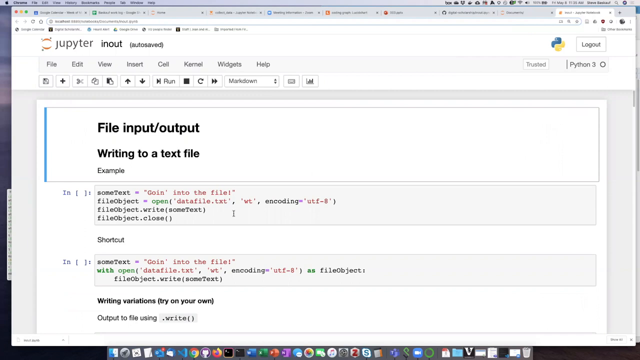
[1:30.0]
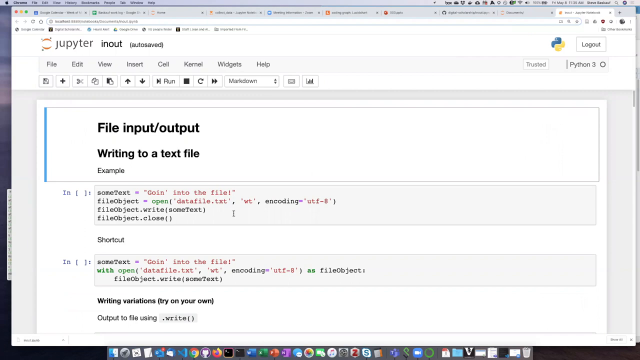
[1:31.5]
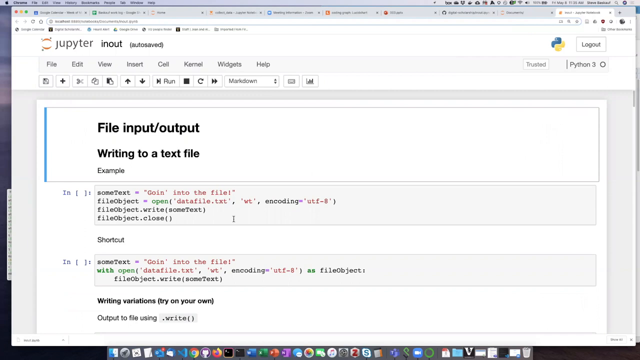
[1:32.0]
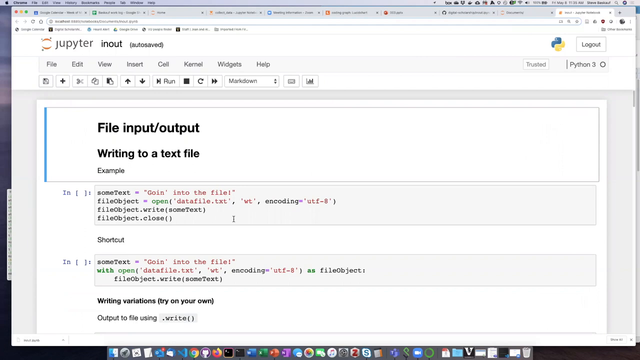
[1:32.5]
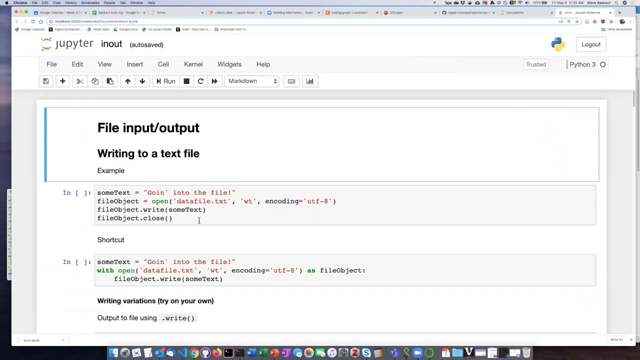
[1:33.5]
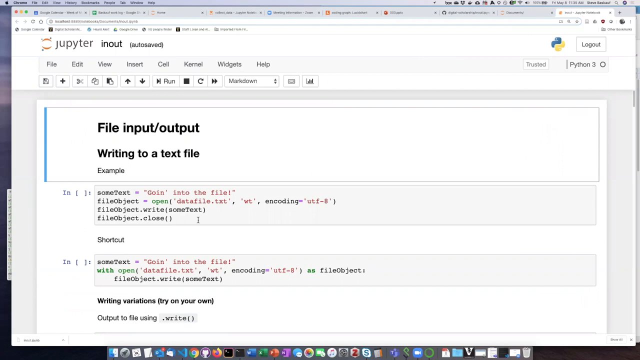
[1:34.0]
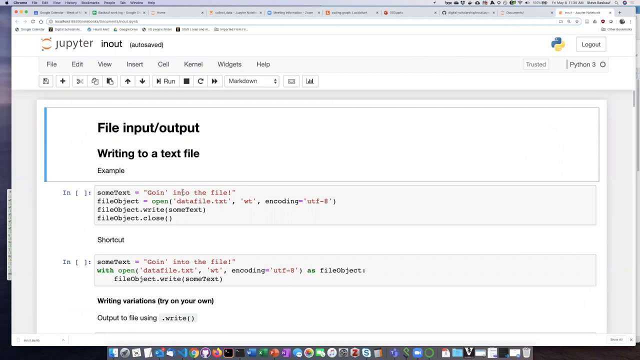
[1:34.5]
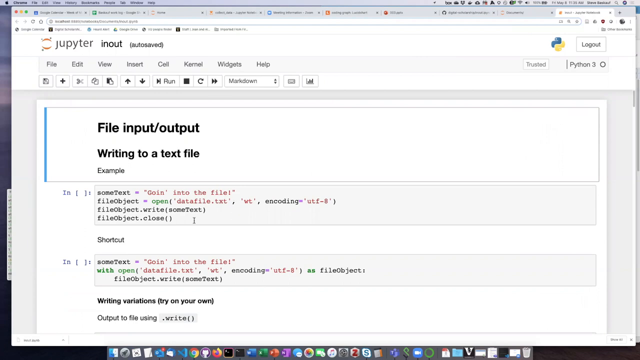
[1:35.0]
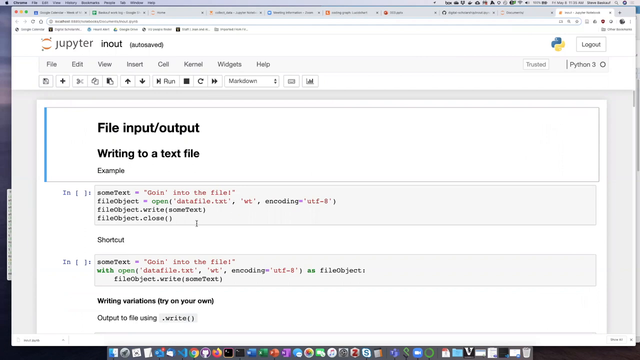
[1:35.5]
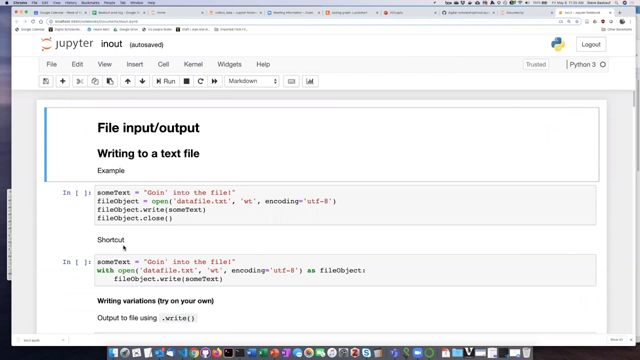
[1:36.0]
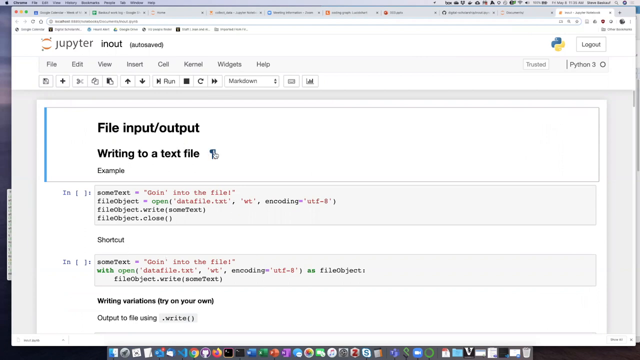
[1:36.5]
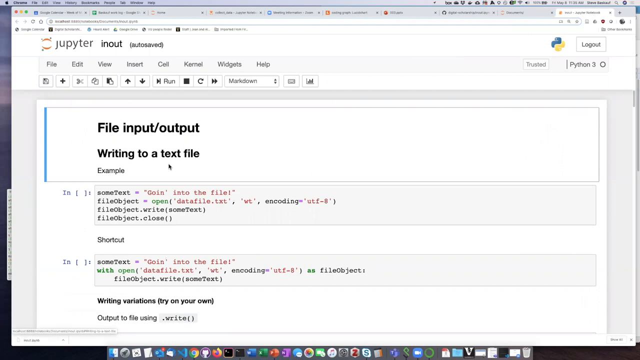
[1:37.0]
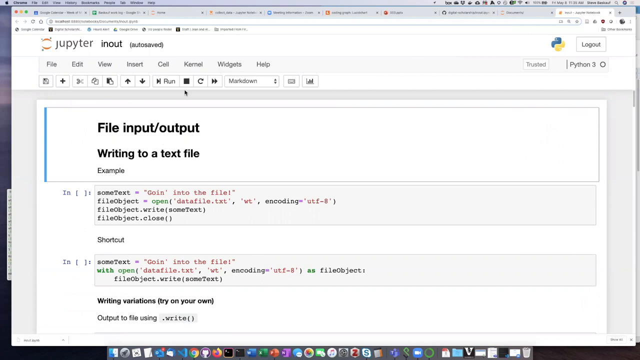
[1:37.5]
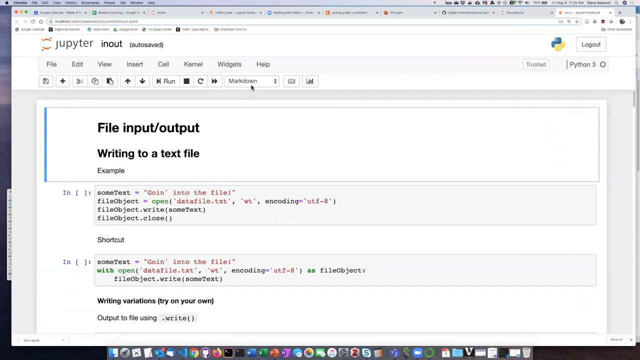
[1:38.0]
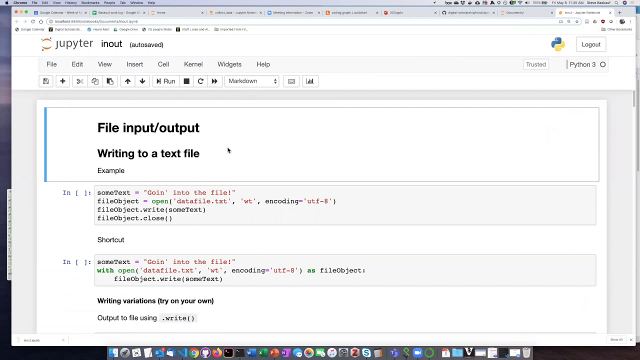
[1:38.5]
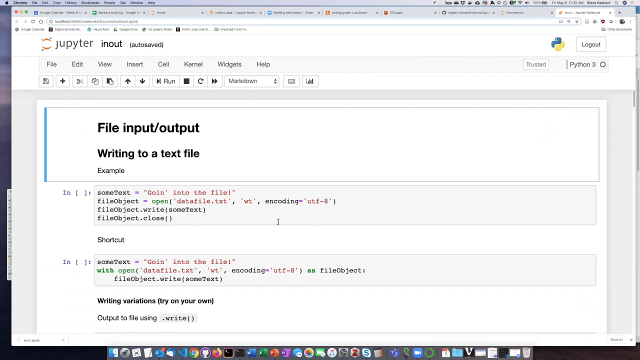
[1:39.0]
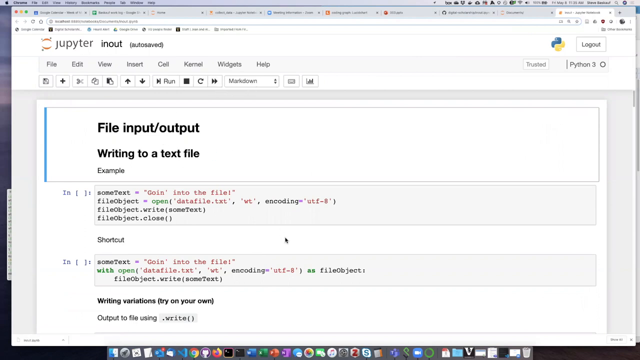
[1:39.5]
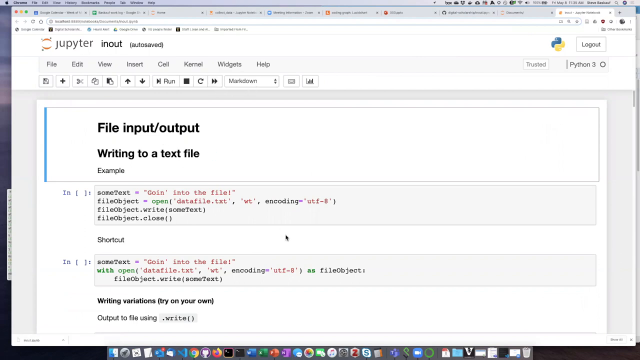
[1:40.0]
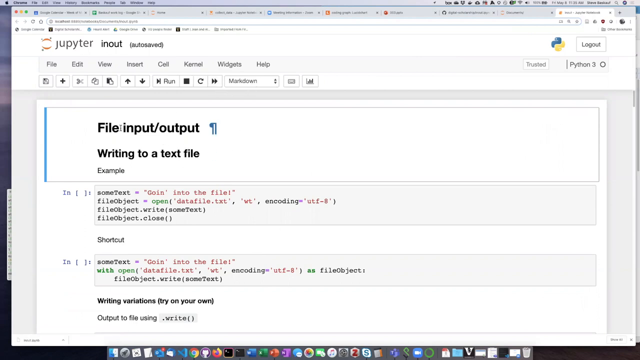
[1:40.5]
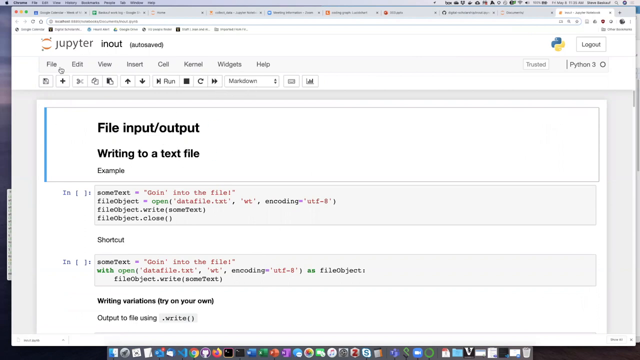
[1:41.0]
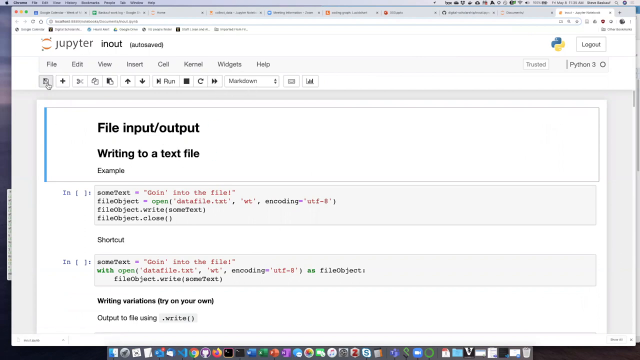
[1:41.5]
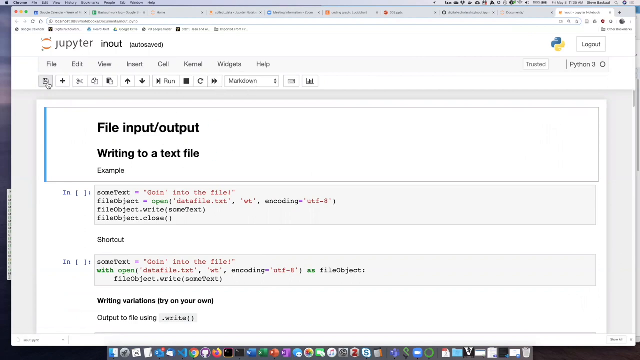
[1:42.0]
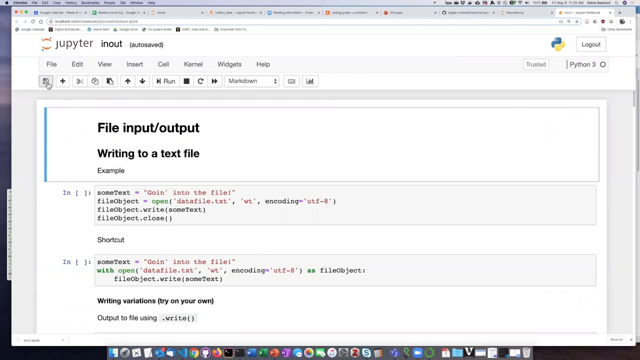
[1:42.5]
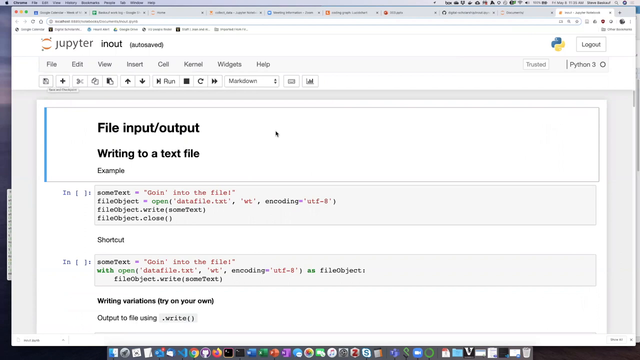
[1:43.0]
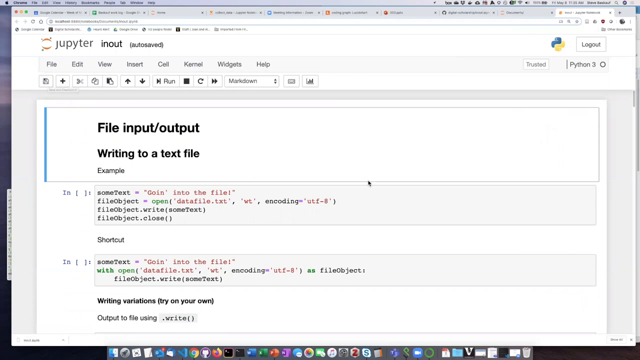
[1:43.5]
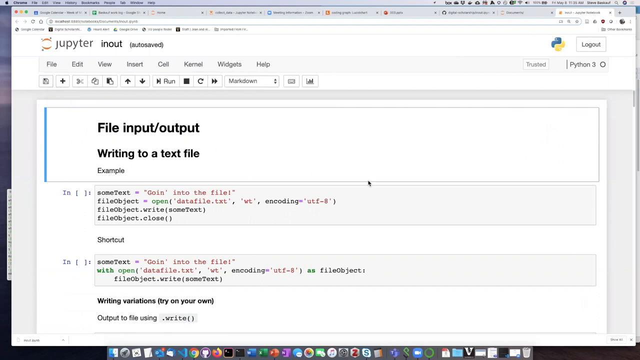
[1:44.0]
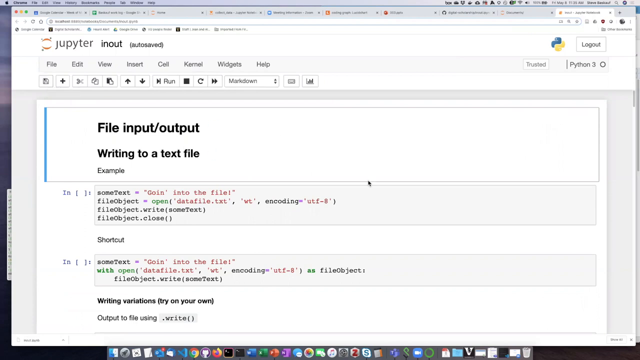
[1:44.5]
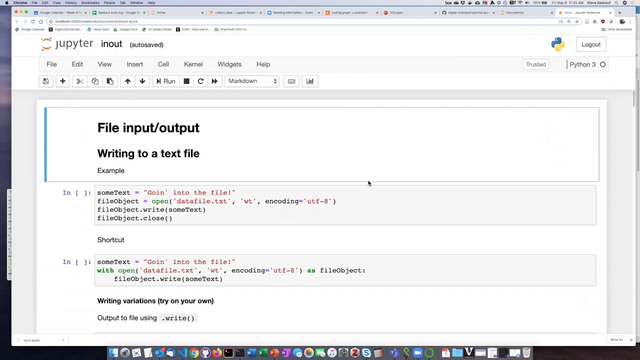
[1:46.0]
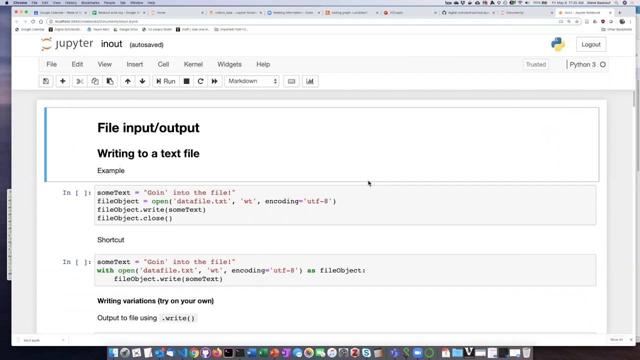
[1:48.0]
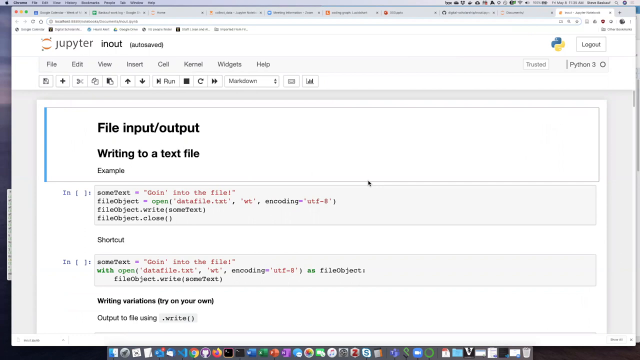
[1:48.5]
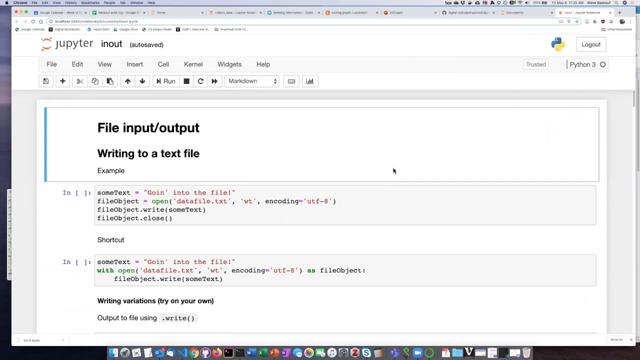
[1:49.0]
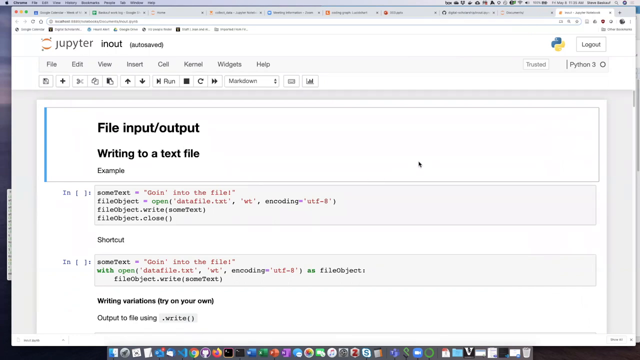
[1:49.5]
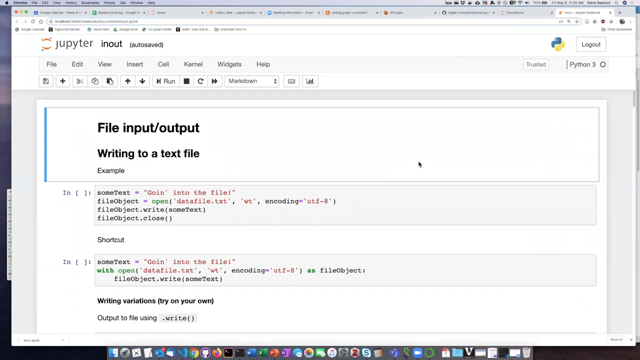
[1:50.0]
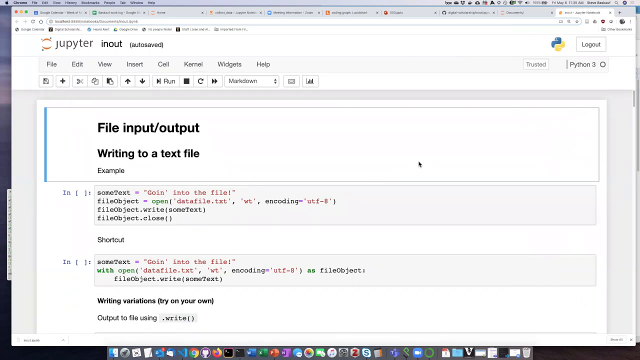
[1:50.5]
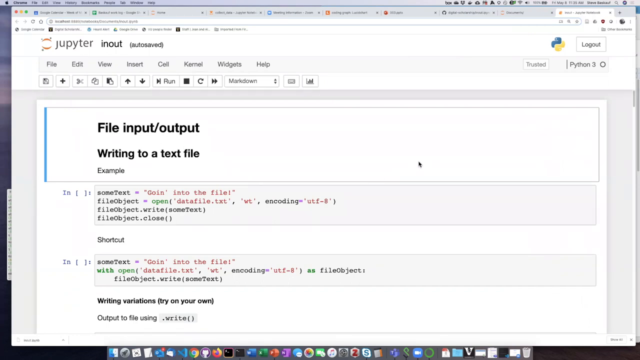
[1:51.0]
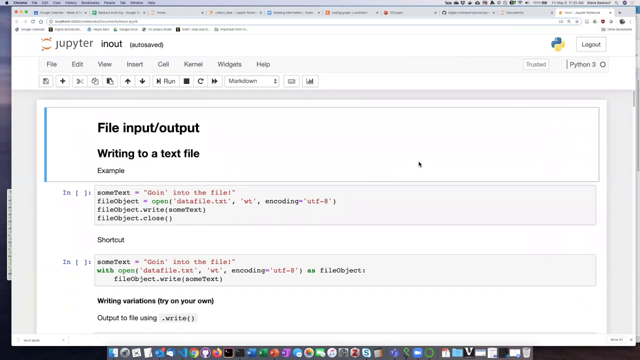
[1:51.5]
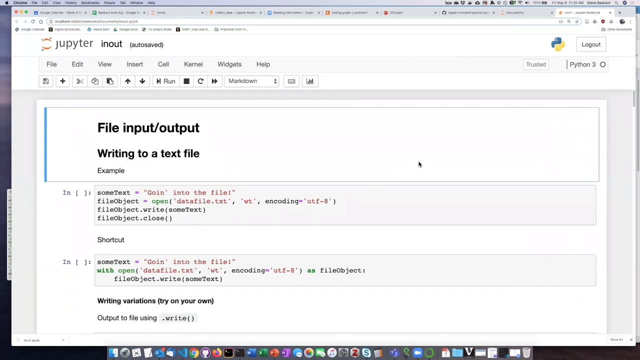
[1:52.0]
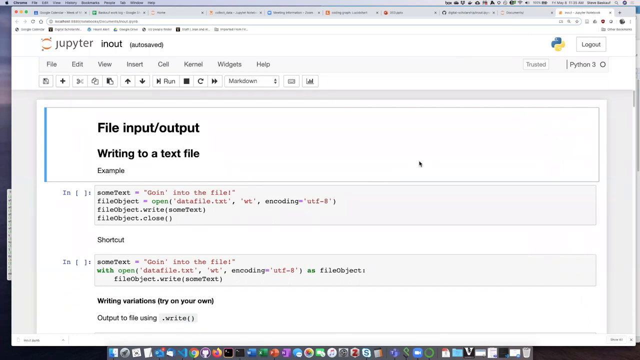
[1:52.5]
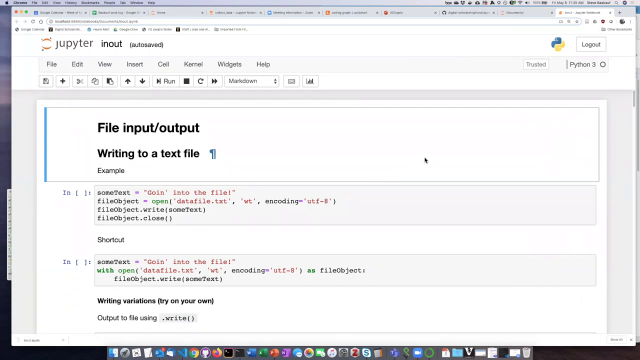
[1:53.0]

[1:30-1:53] The page with "file input-output writing to a text file" remains on screen, showing HTML code in black and red writing and the word "open" in green. The cursor moves up to the top, then down to the bottom, then up to the top left tab, where a pointing finger appears, and then moves back over to the right side. On the right, text reads "Python-free," and there are boxes reading "log out" and "trusted." There is a yellow and blue icon made of circles: two blue circles in a backwards L-shape and two more circles in an upside-down L-shape, forming a sort of three-dimensional cube. The word "Jupyter" appears, along with "auto-saved," and a menu reading "file," "edit," "view," "insert," "cell," "kernel," "widgets," and "help."